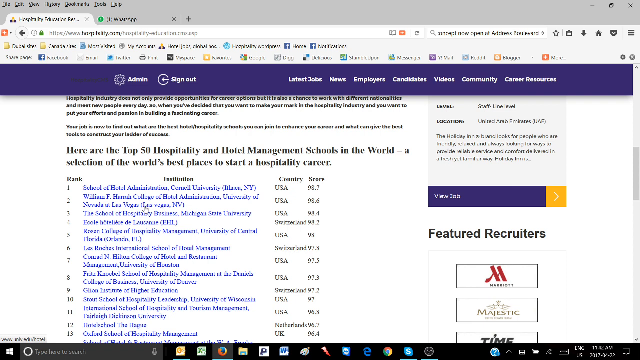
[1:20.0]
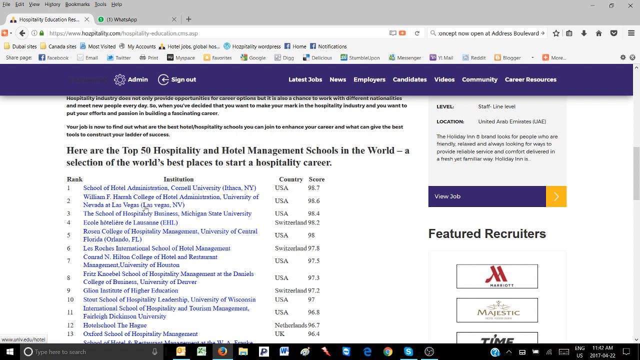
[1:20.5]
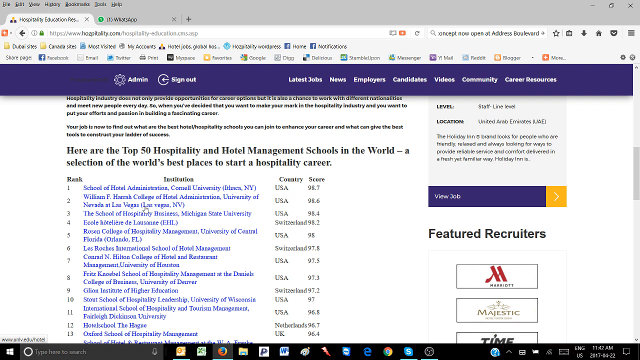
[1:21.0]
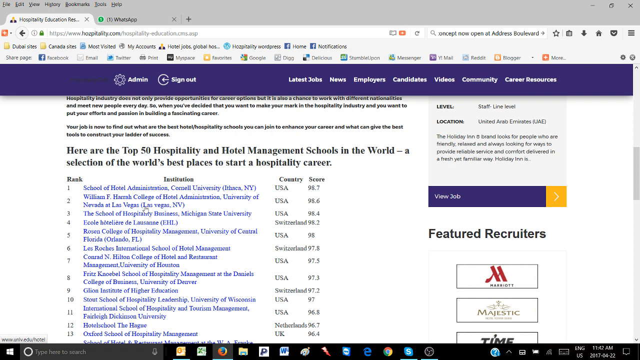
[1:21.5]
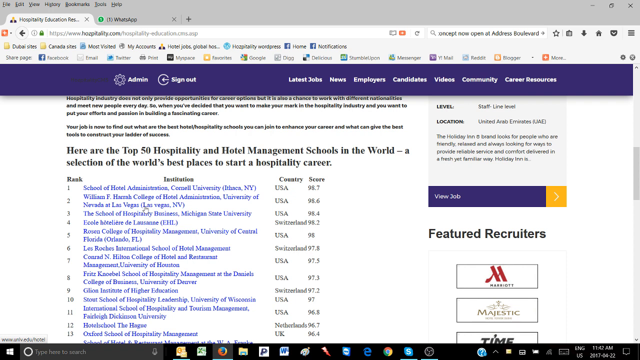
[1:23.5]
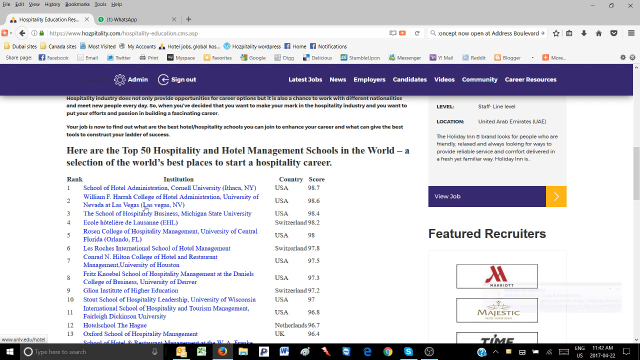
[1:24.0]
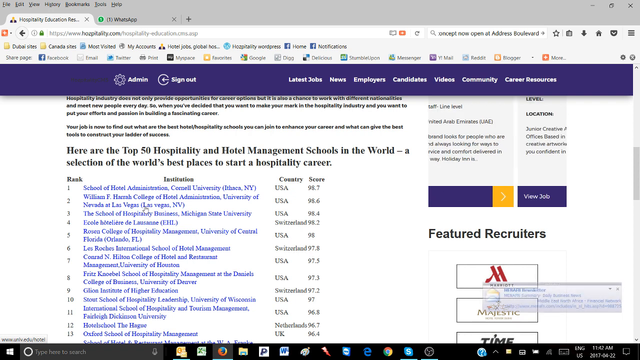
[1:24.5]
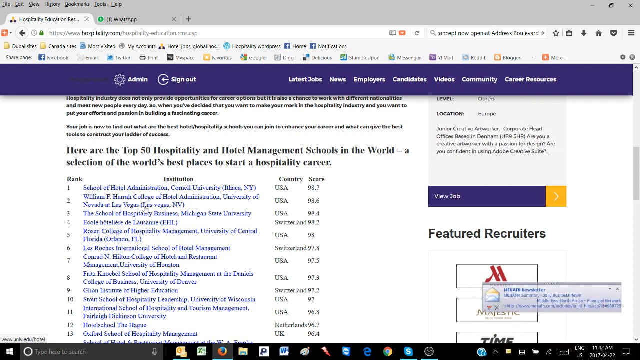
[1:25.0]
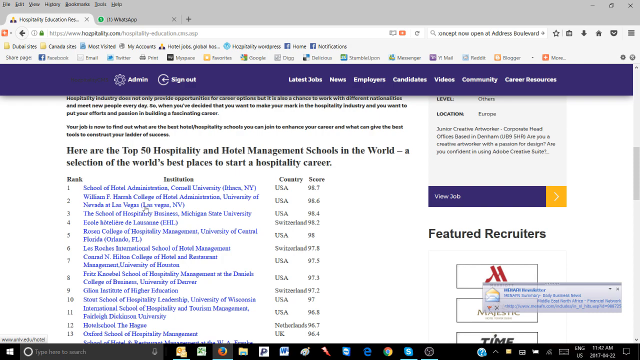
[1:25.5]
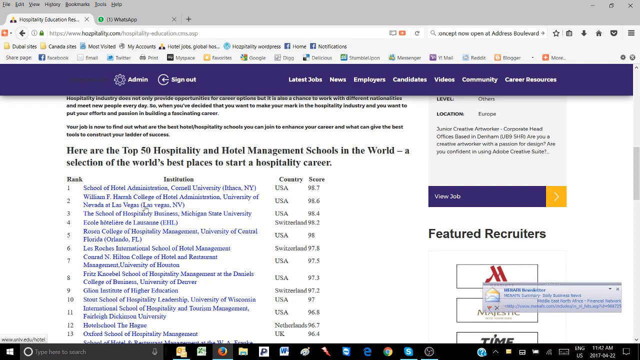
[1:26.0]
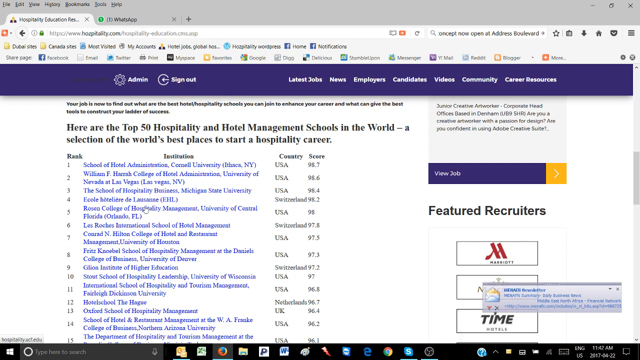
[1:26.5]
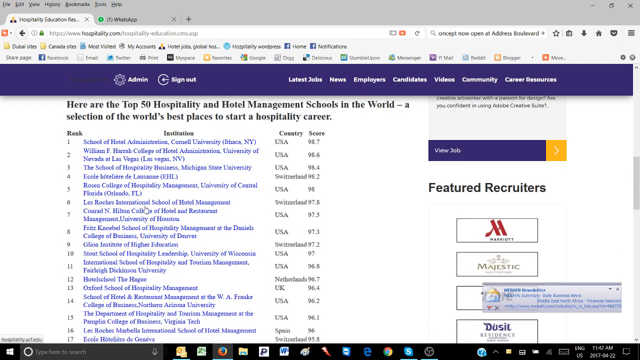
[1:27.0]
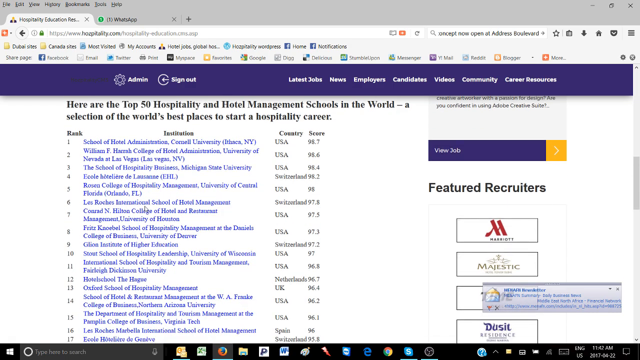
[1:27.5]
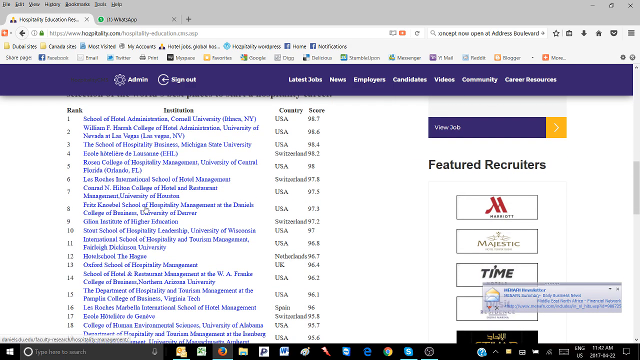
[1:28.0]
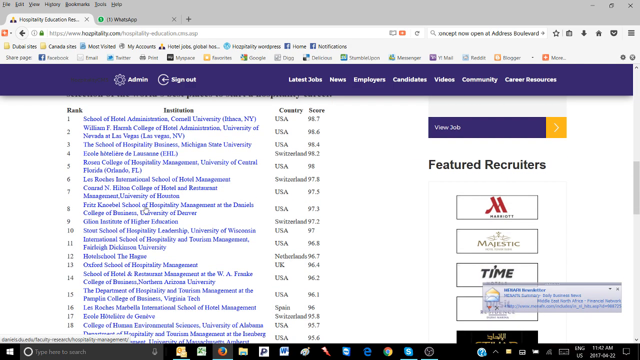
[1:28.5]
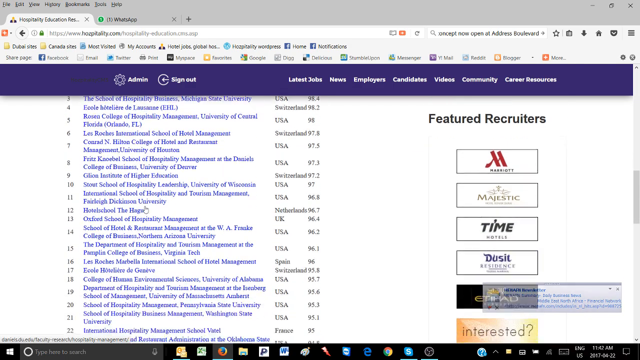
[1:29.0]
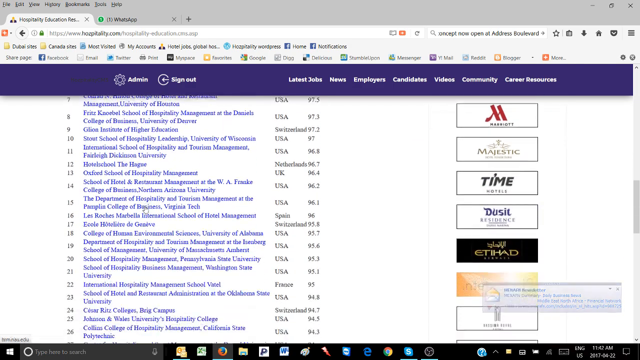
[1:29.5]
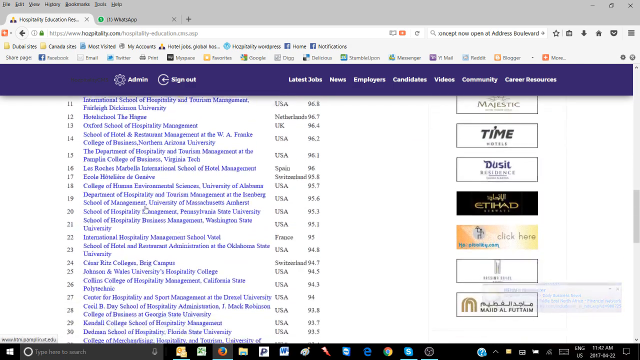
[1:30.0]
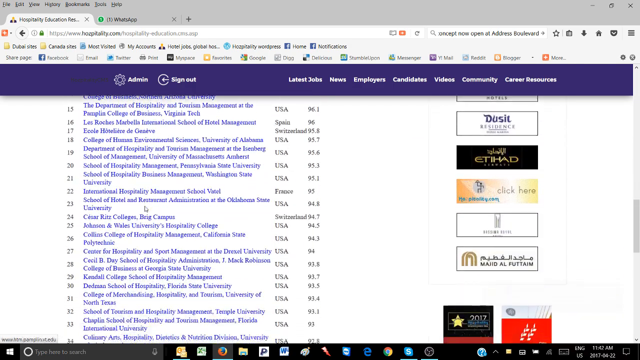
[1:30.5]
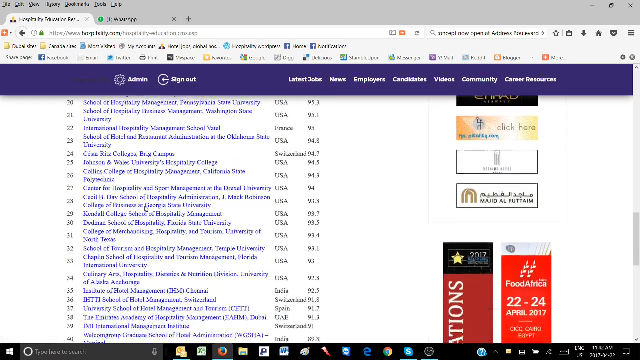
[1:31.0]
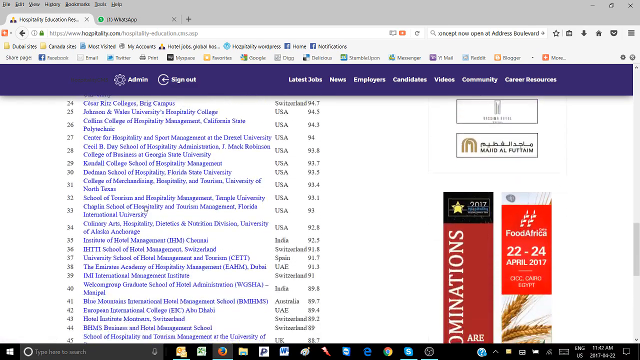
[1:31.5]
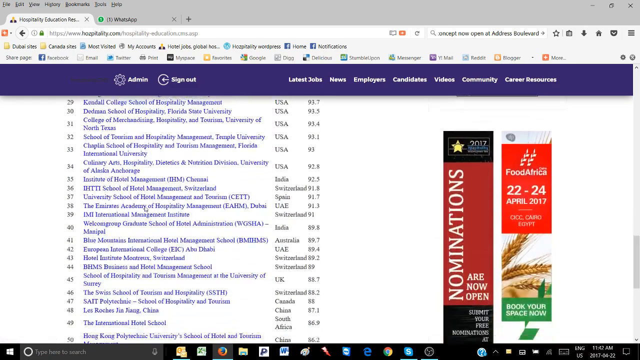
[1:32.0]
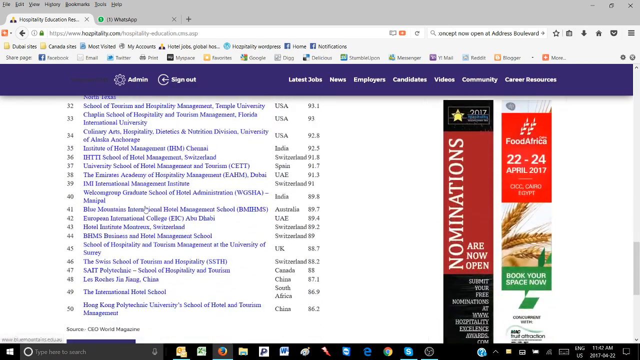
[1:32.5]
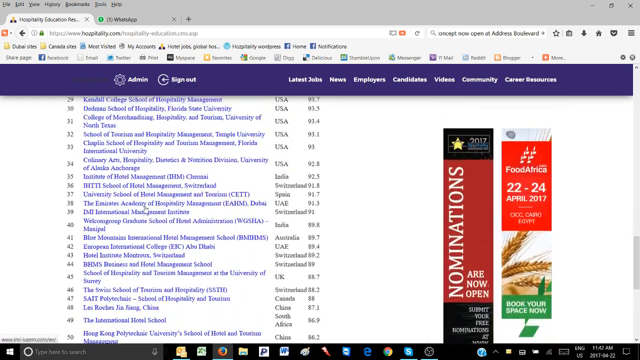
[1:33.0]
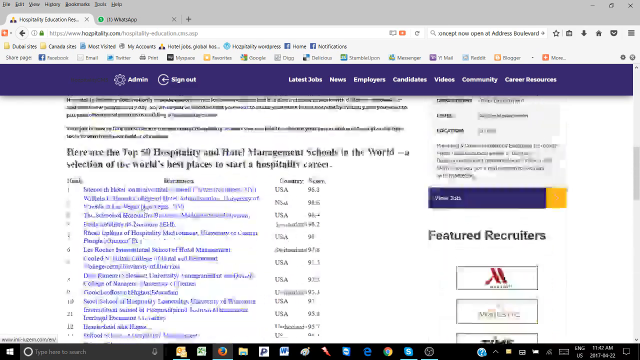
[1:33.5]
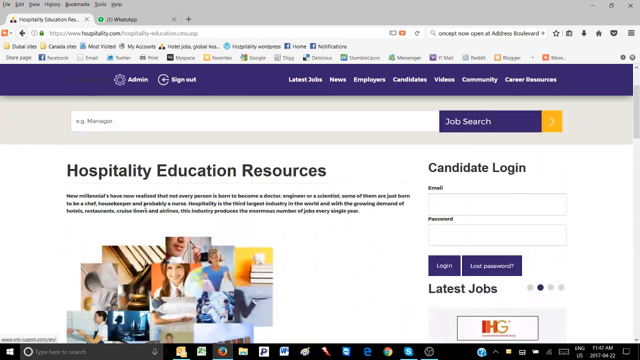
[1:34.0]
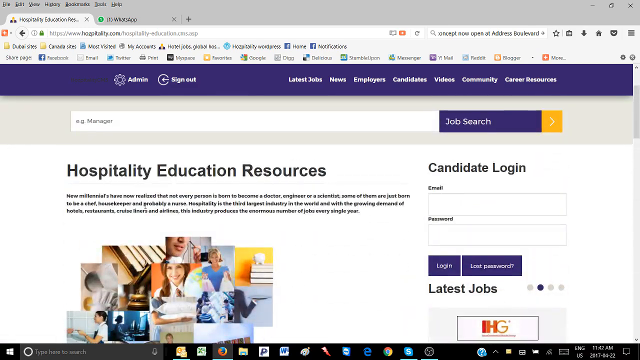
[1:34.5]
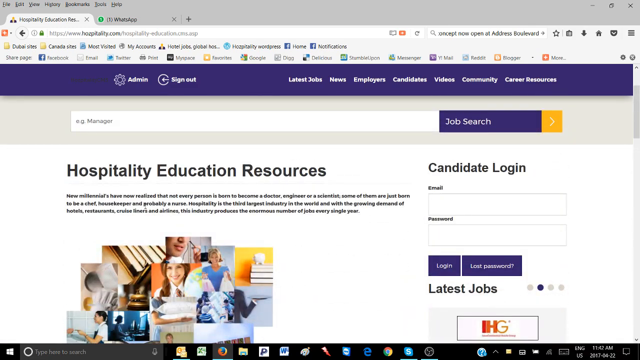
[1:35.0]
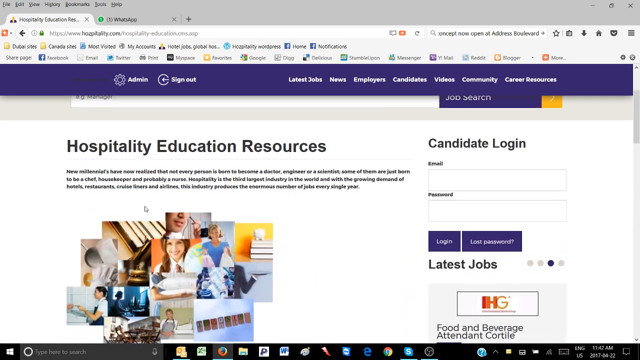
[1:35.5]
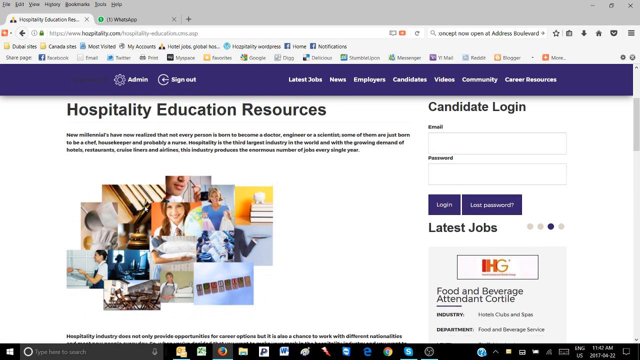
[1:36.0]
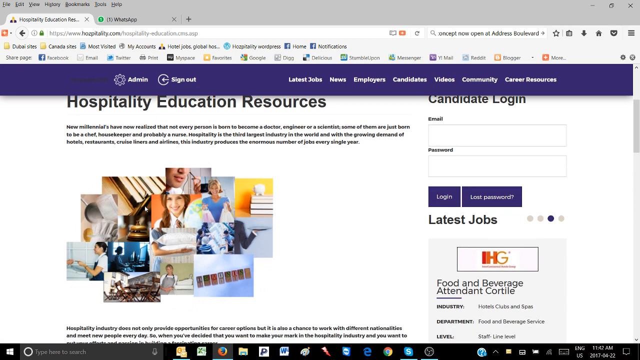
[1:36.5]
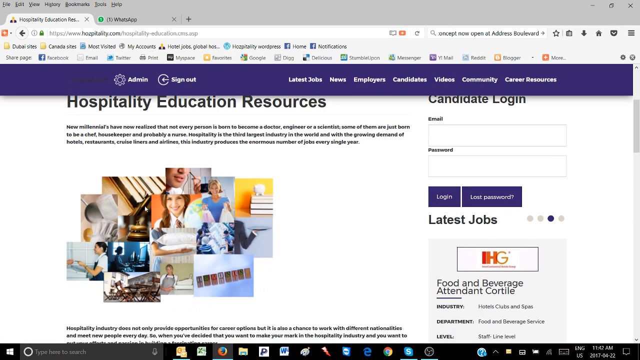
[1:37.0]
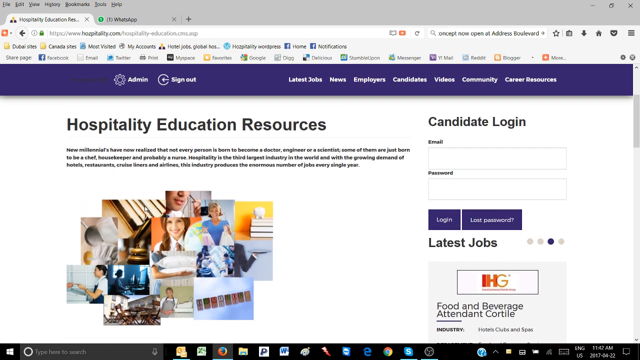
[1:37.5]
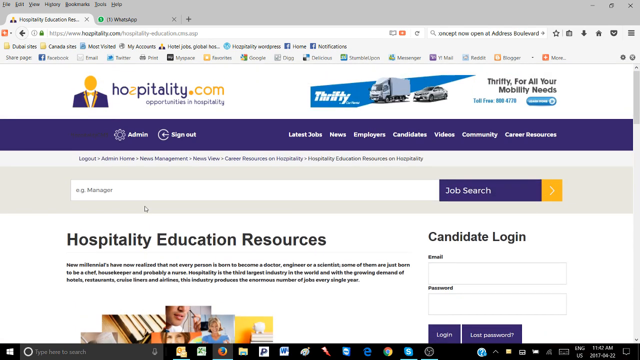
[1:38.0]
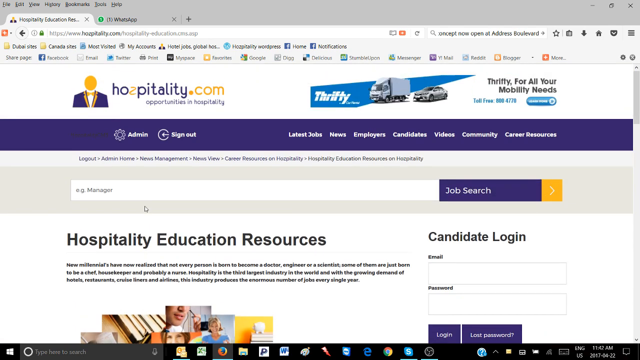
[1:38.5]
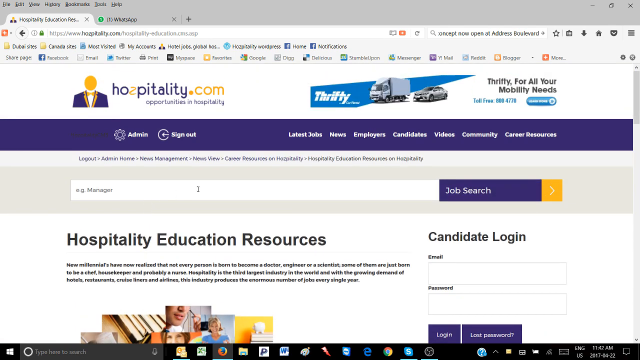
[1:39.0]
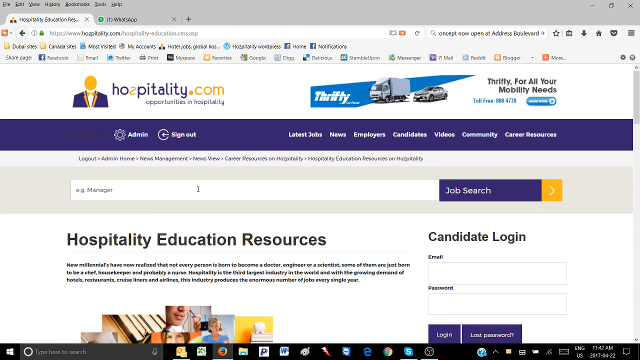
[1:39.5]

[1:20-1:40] The cursor hovers over number two. The page scrolls very fast from the bottom to the top, showing the 50 hospitality education resource schools, and at the very top are the elements of the computer screen, including that the page is hospitality education. Beneath that is a toolbar with the website, and beneath that a toolbar of links such as my activities, most videos and most visited, with eight links in total. Toward the end there are two Facebook icons. The hand cursor hovers over the blue portion. On the right, a small box keeps popping up and moving very fast from right to left. At the bottom of the screen are multiple clickable icons, including something like a world, along with a toolbar at the bottom.